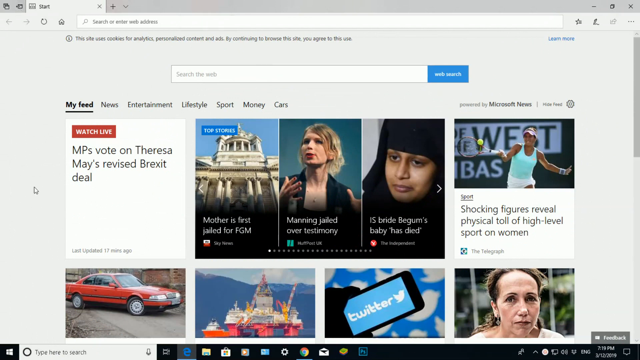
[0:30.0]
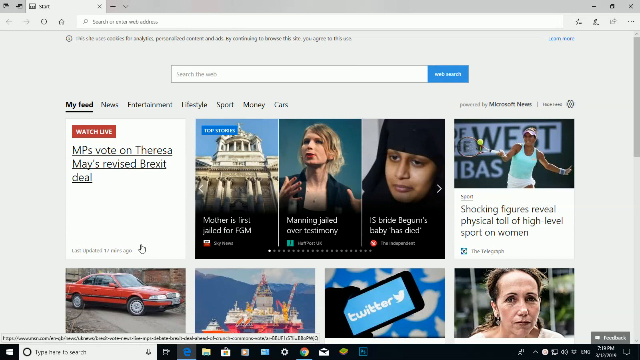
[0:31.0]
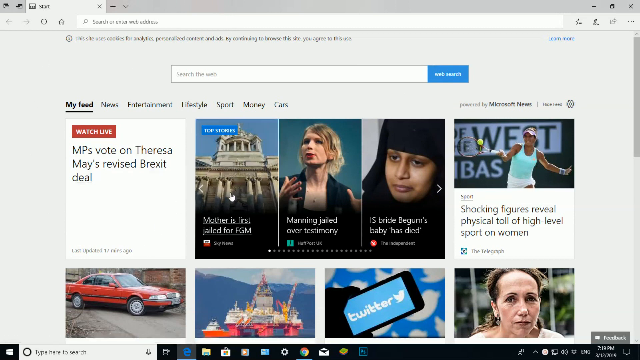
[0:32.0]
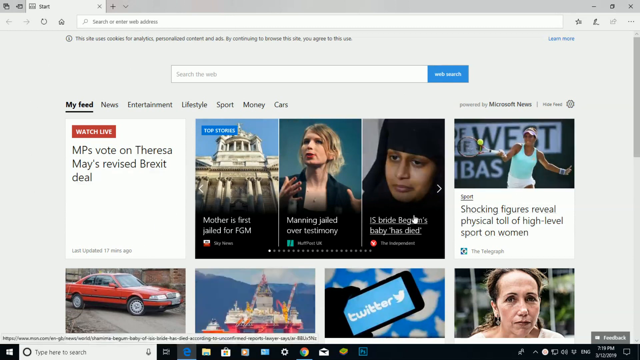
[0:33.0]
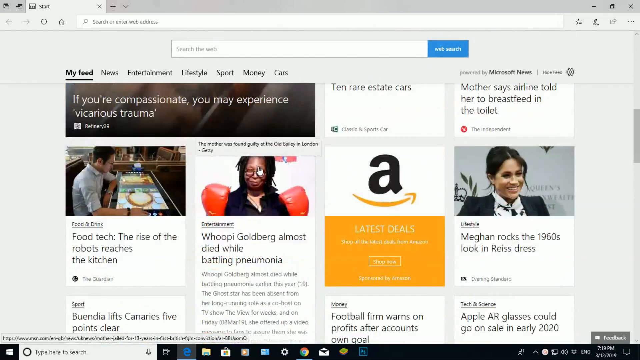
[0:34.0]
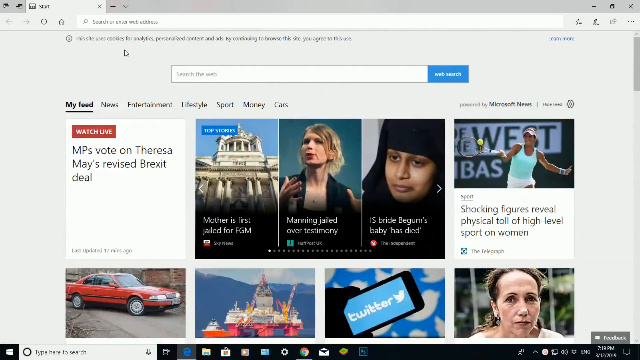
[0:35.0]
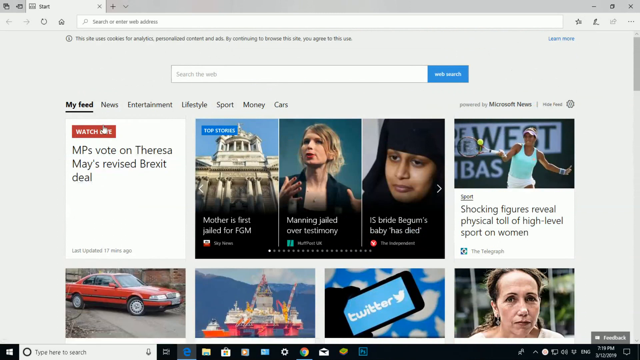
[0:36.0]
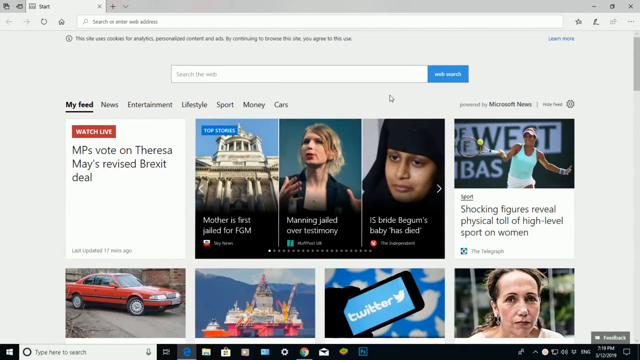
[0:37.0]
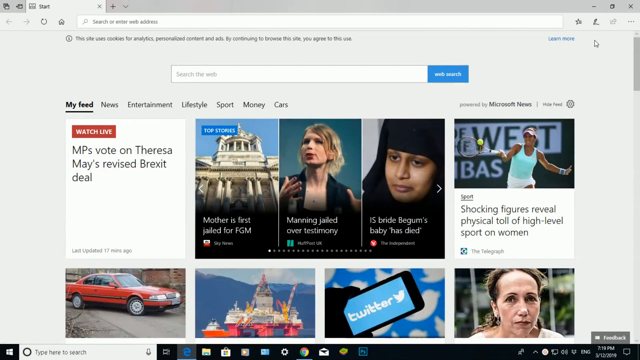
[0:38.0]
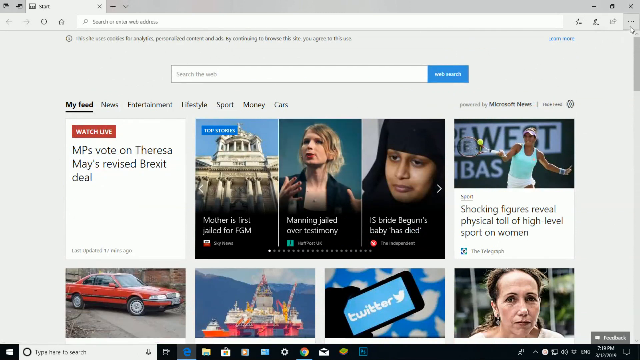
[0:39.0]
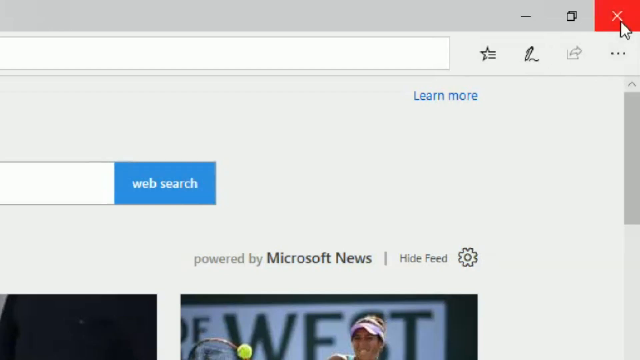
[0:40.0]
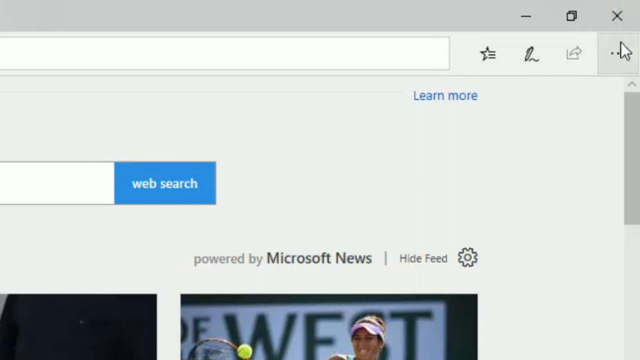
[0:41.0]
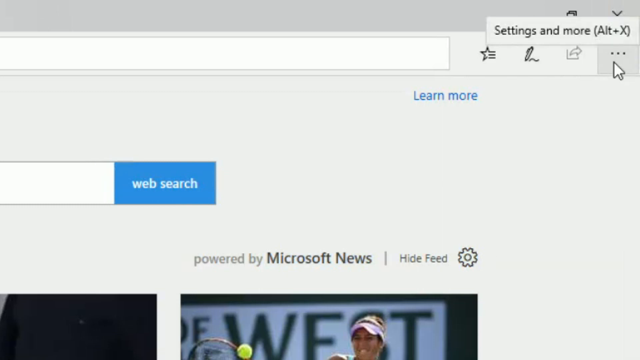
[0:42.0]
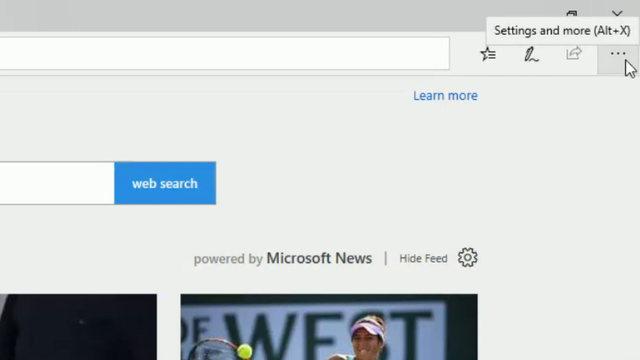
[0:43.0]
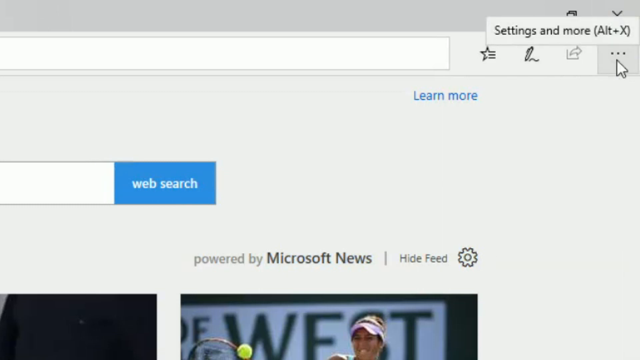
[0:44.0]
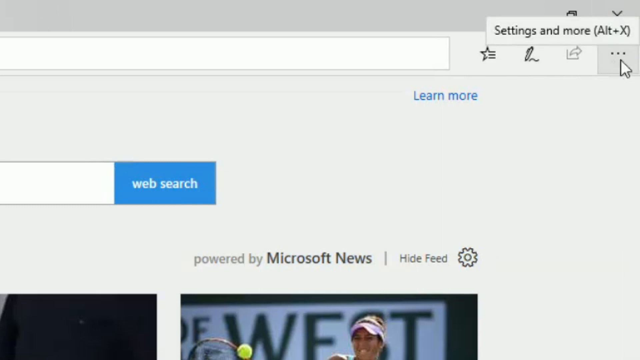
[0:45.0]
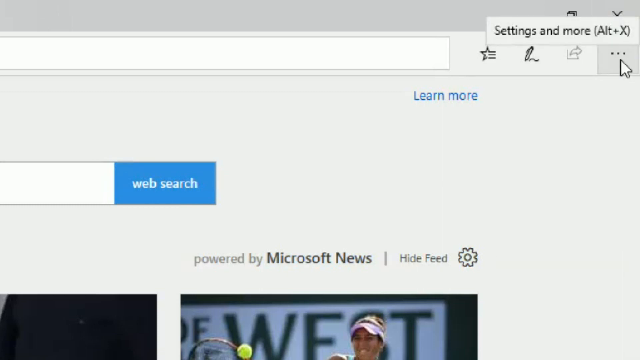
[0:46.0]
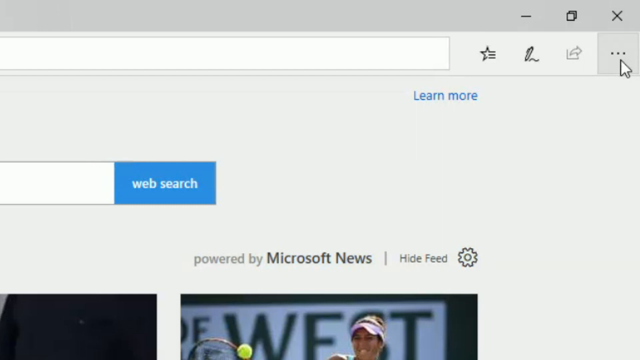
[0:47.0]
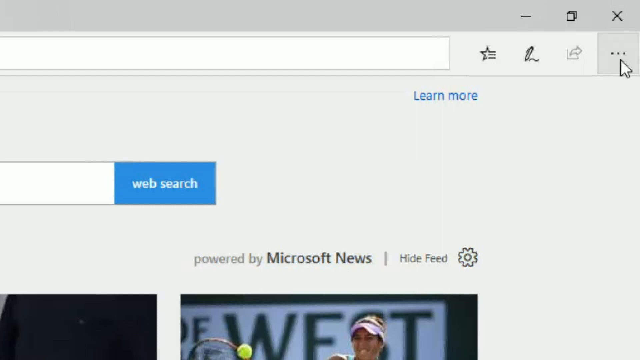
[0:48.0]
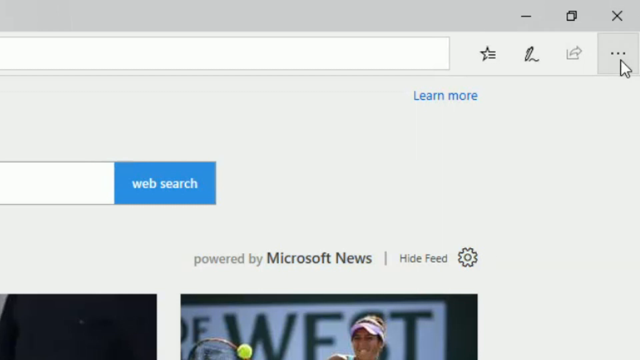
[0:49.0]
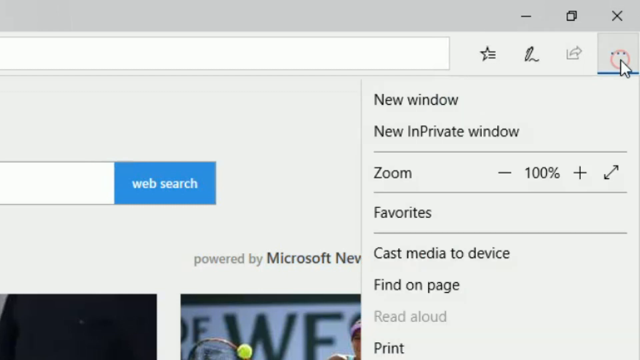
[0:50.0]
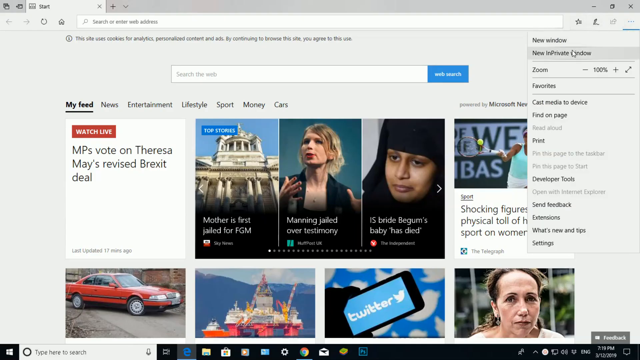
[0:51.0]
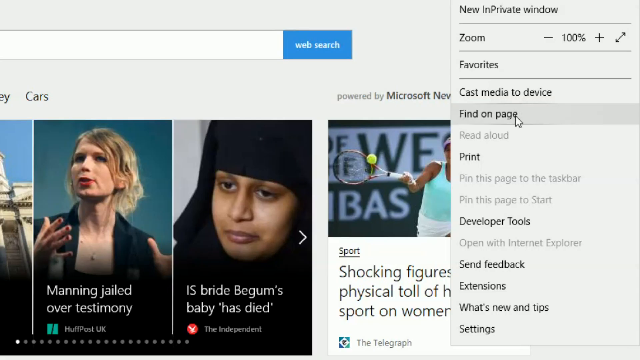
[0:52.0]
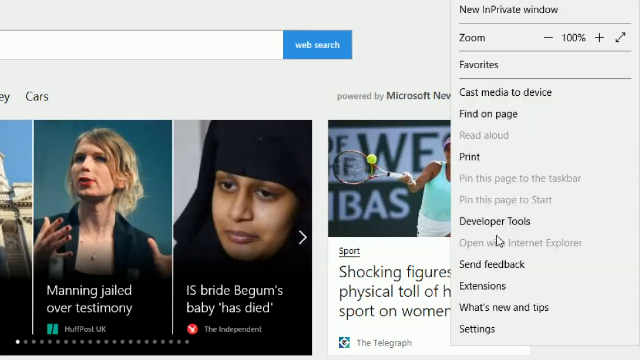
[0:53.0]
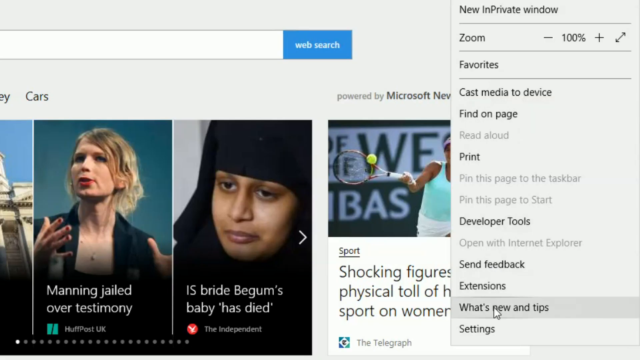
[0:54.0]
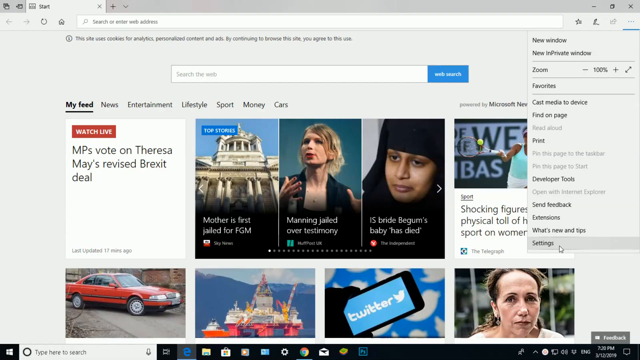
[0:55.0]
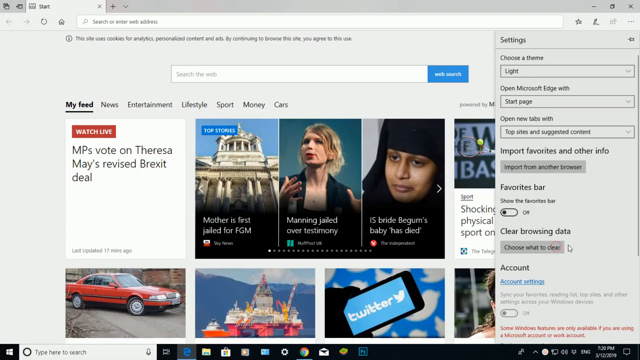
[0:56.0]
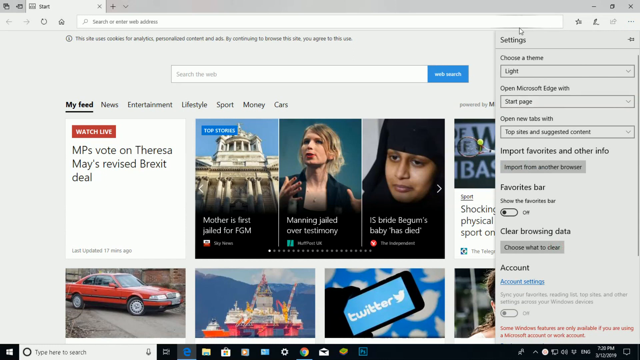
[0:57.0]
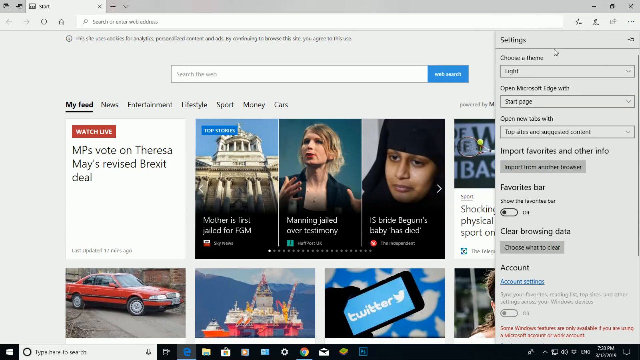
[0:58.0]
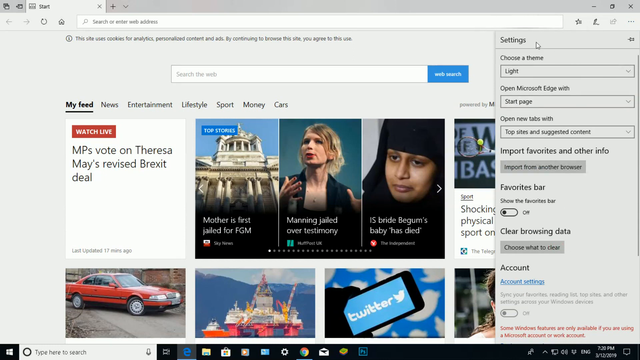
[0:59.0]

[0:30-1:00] A news website is shown with categories including news, entertainment, lifestyle, sports, money and cars, and preview thumbnails of news stories arranged in a box- or grid-like layout. The cursor moves to the top right corner to hover over a button with three dots, moves to the X, hovers a few times, and ends up hovering over the three dots, which represent settings and more, with the shortcut Alt plus X on the Mac computer. The user clicks it, opening a drop-down menu, scrolls down to settings and clicks it, then circles the mouse around the top choices about choosing a theme.